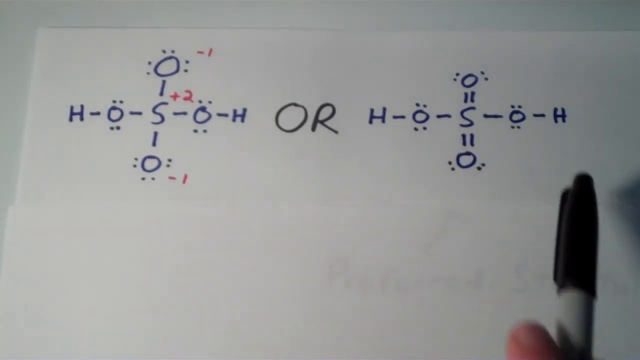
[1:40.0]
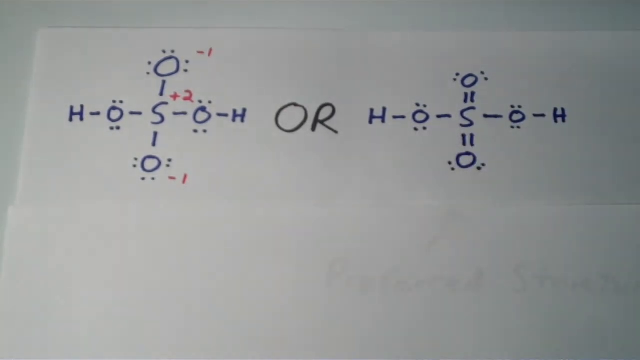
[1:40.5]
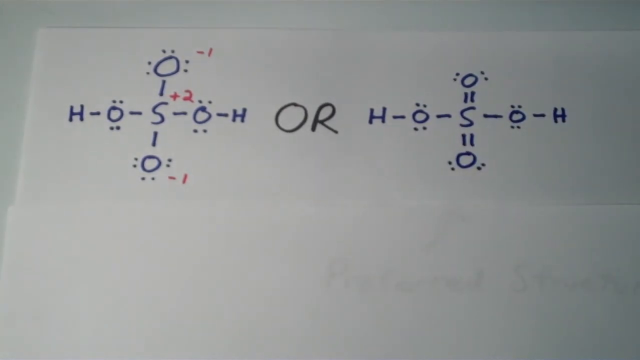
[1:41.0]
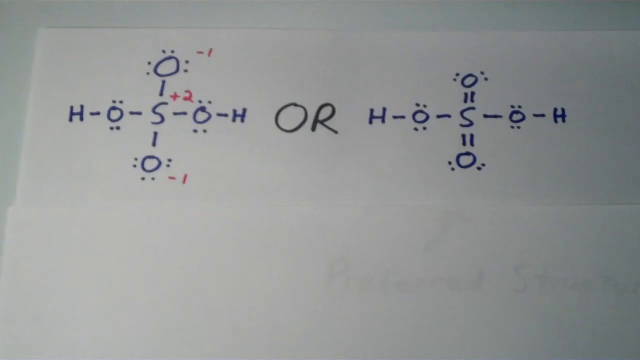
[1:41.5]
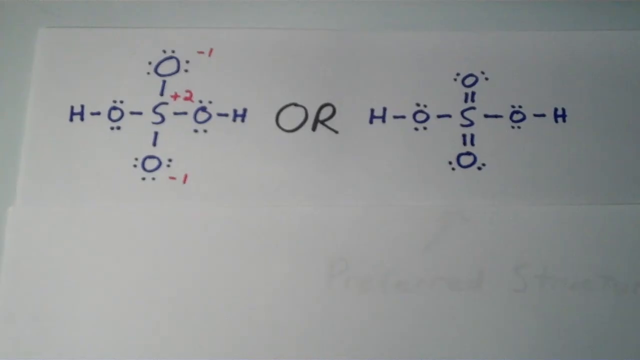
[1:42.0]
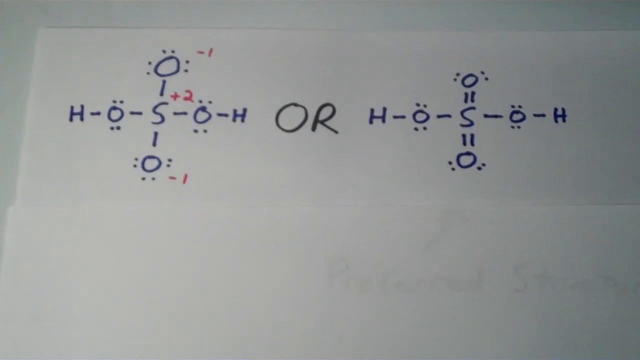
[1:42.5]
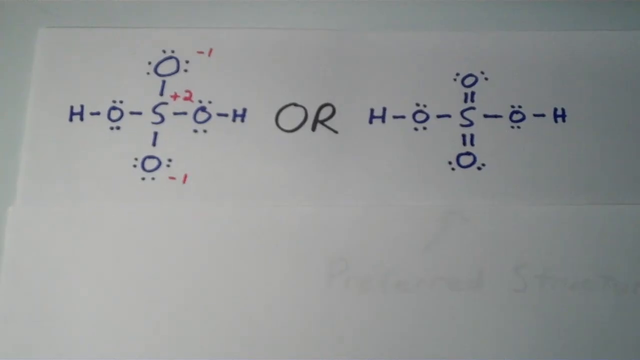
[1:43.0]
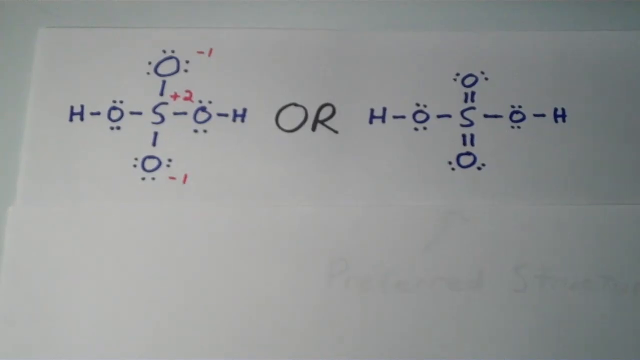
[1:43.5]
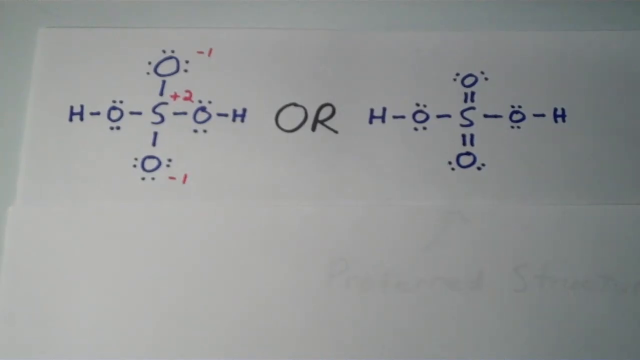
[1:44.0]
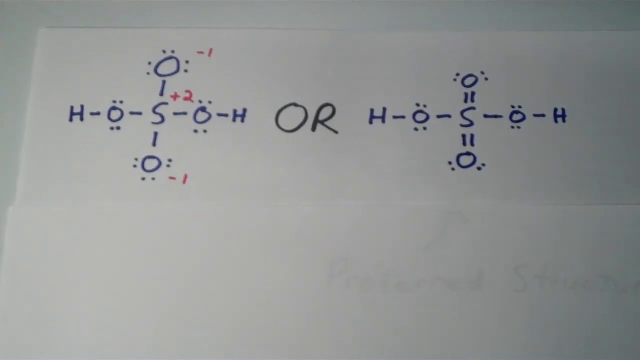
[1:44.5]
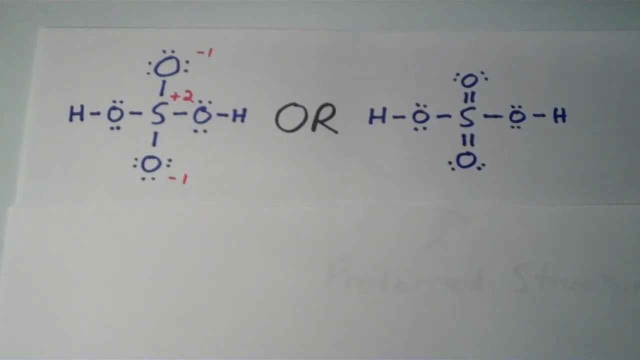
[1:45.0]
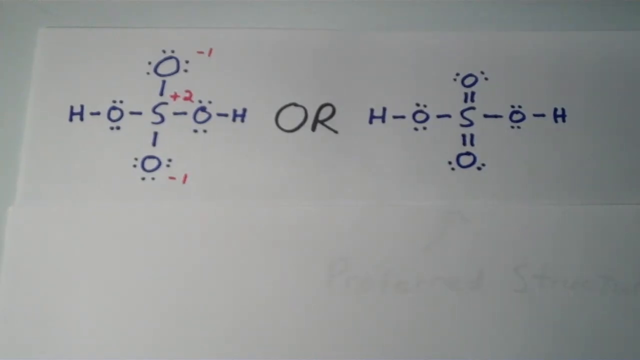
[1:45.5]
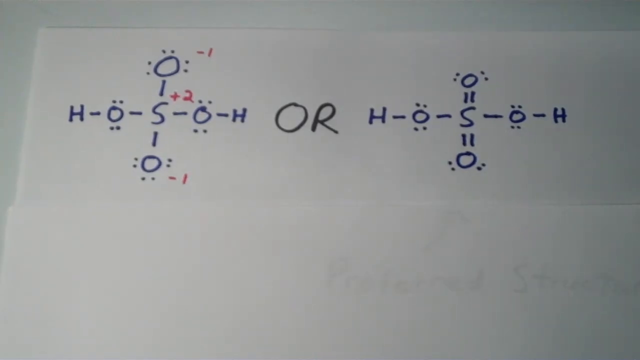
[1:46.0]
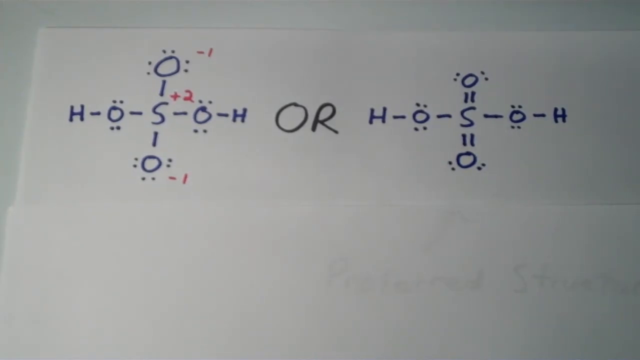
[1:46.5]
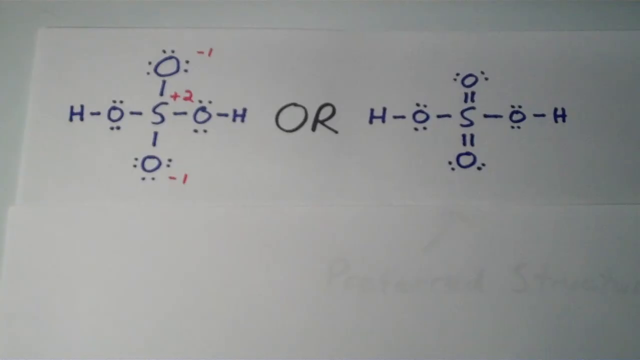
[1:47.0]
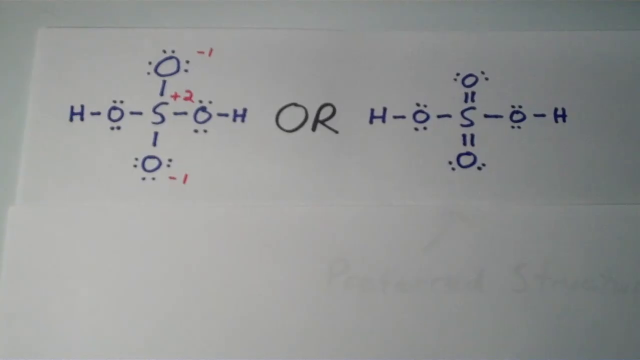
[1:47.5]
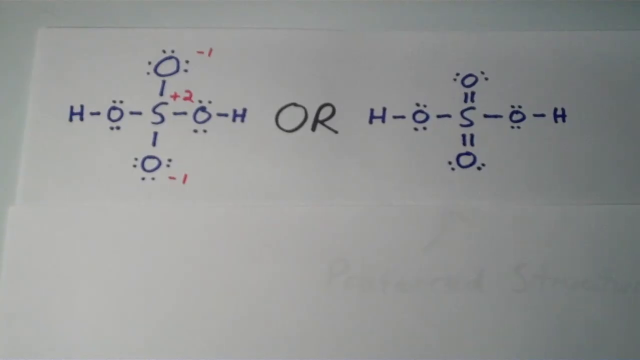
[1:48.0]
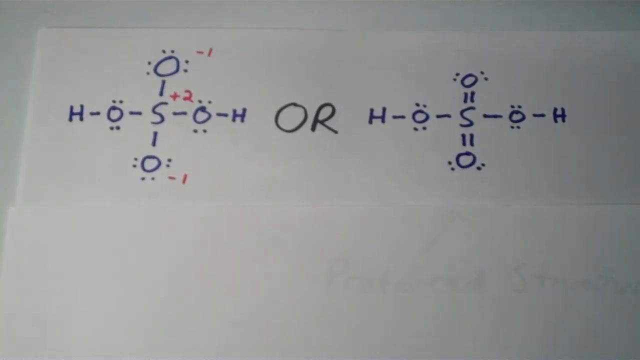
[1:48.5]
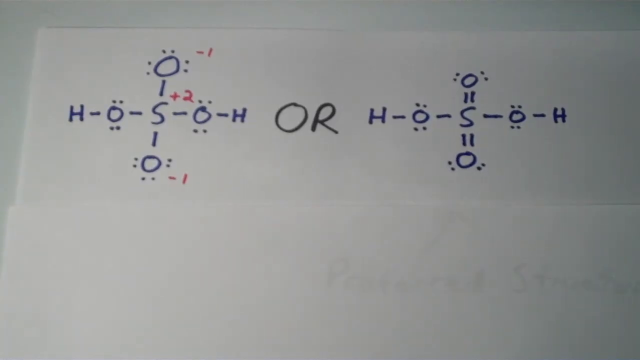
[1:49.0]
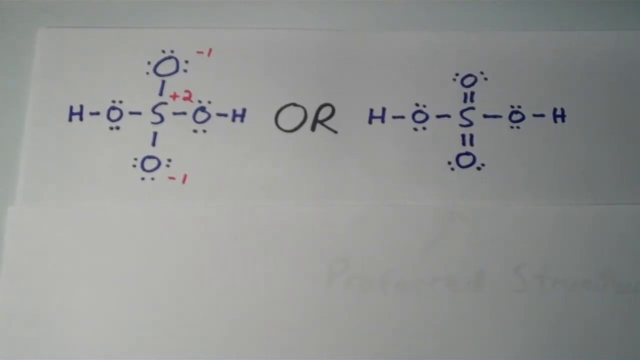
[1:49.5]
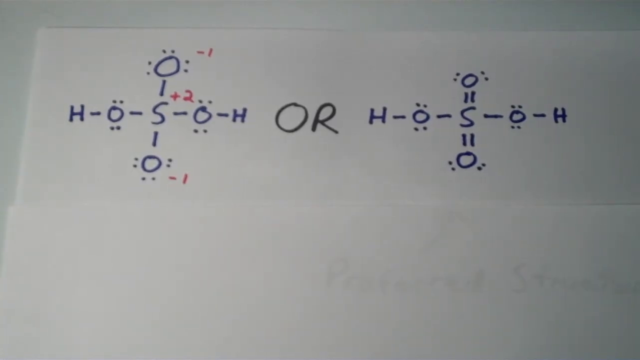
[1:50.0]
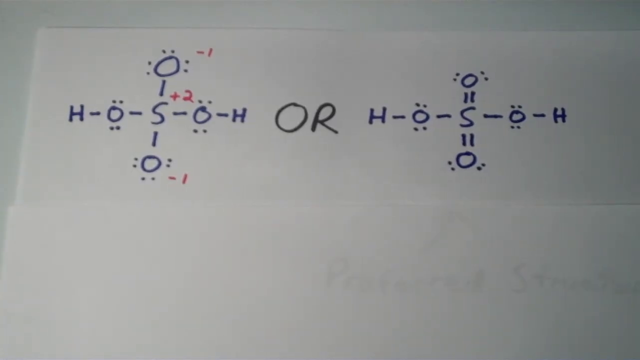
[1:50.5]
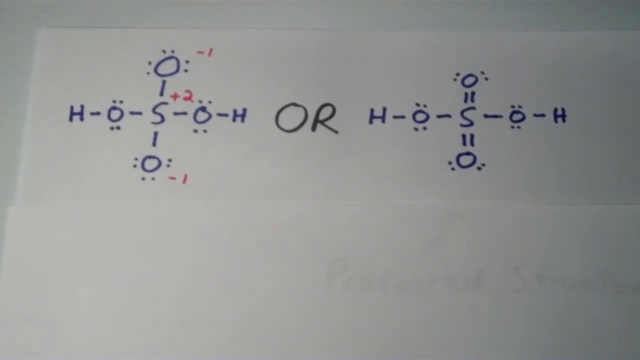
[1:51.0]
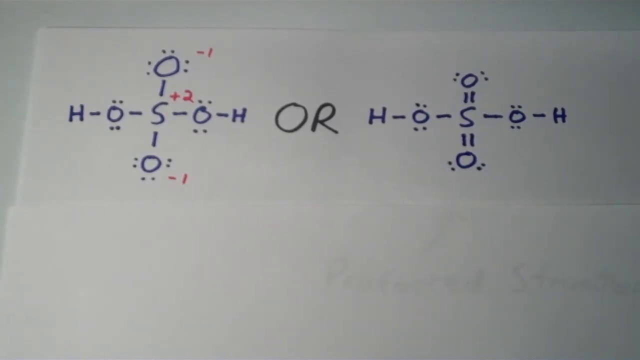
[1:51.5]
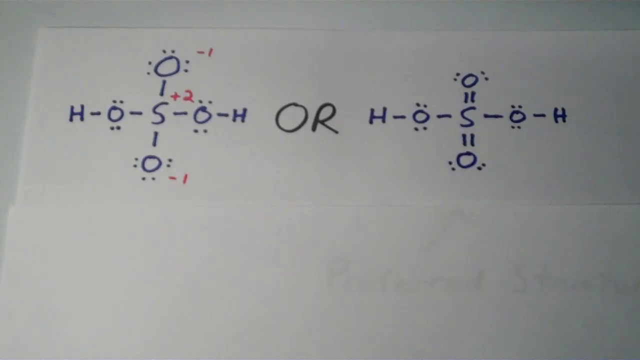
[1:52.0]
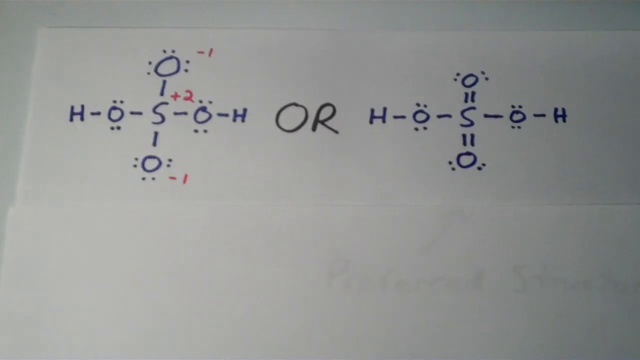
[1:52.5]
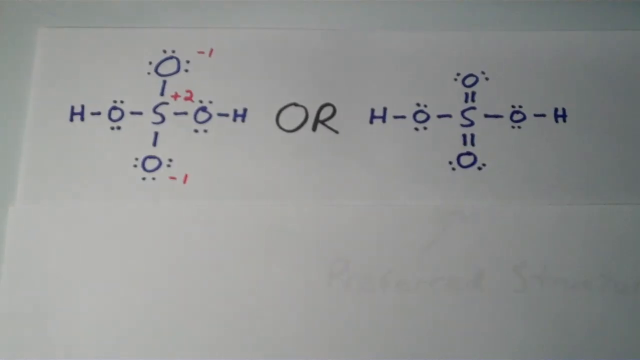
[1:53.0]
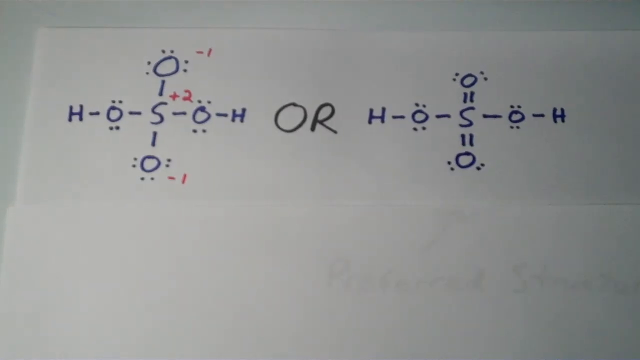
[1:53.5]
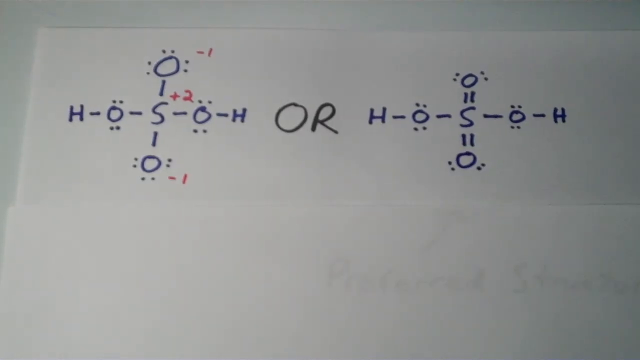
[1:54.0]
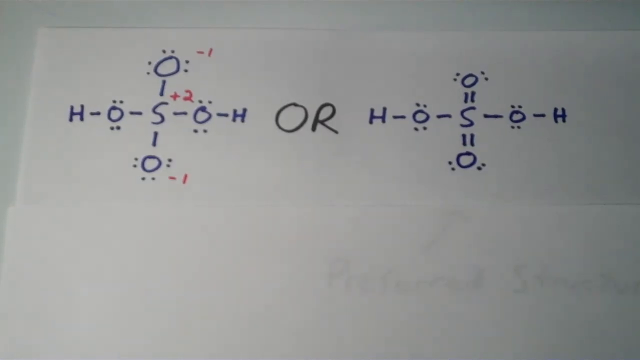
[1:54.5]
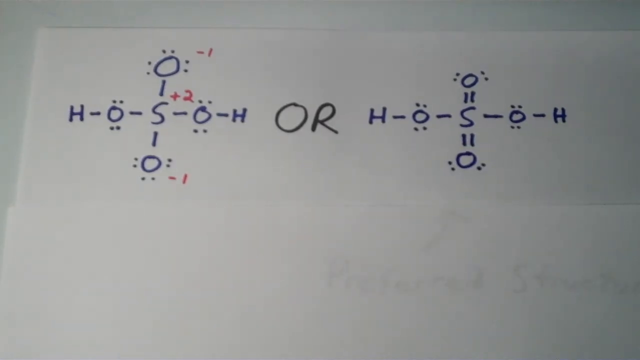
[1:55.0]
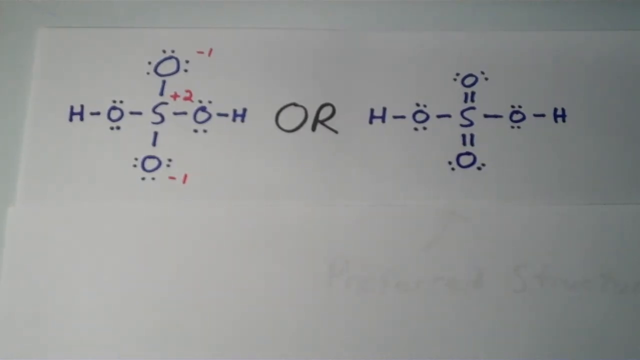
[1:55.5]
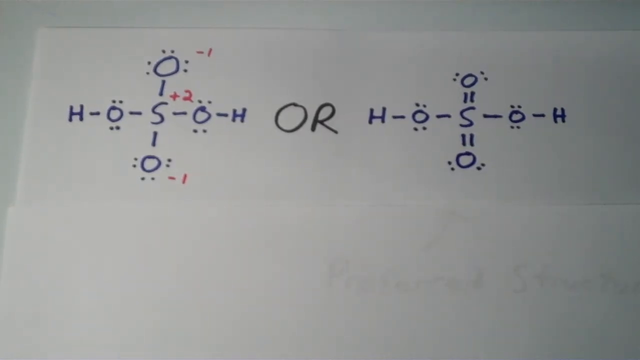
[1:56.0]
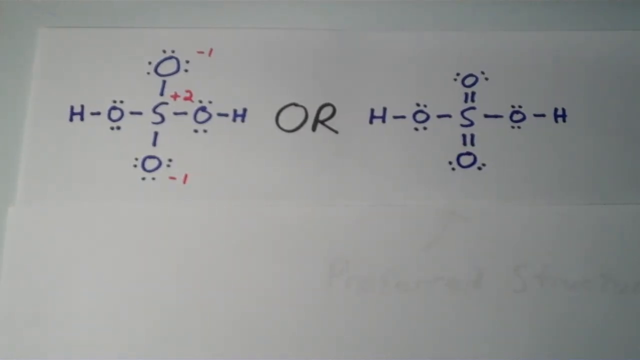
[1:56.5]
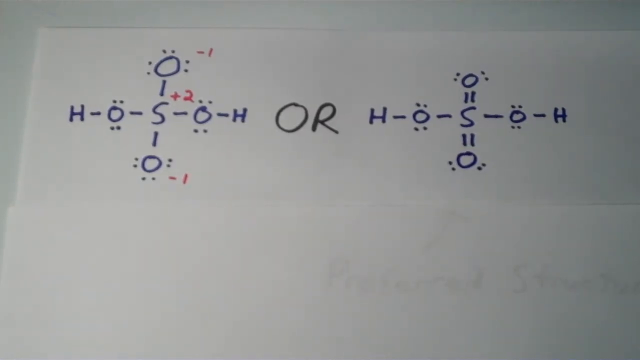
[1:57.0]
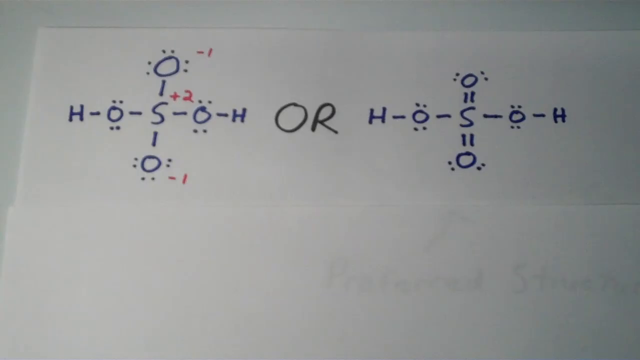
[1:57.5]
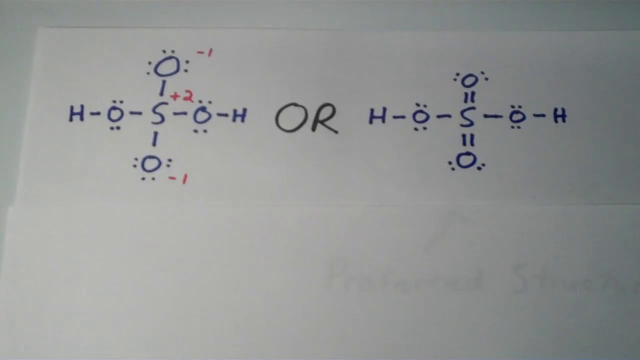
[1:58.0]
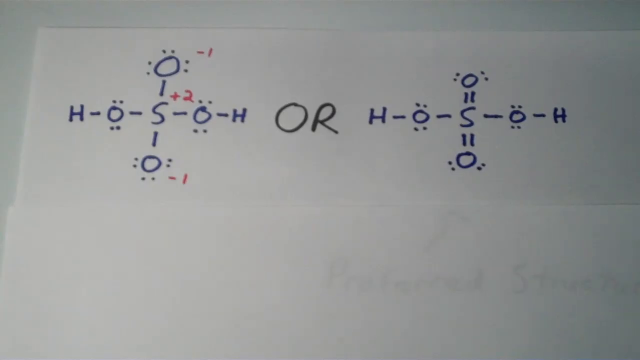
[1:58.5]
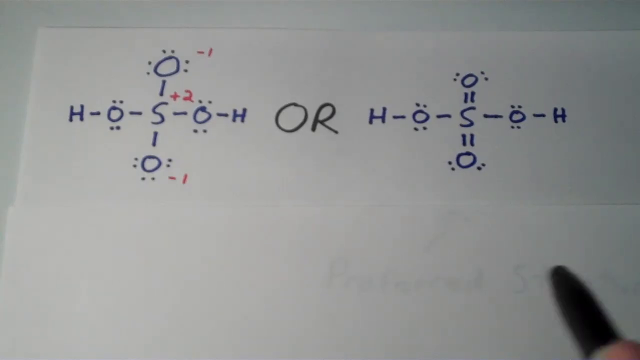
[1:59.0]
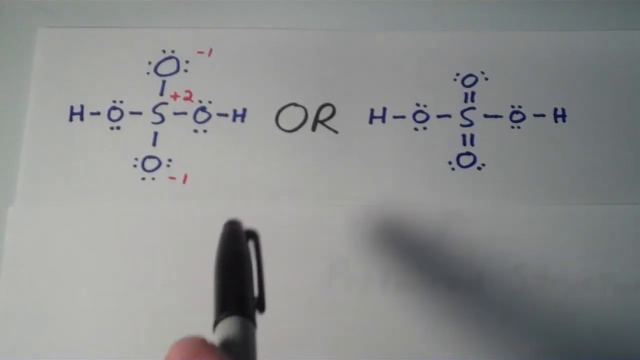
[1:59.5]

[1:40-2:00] The page does not change. The left structure shows a hydrogen atom attached to an oxygen atom with four dots around it; that oxygen is attached to a central sulfur atom, which is attached to another oxygen atom with four dots, which in turn is attached to an H atom. From the central sulfur atom, single bonds also lead to two more oxygen atoms, the top one with six dots and the bottom one with six dots. A plus two is next to the sulfur, and a negative one is on both oxygen atoms attached to the sulfur. The structure on the right is much the same, except that the oxygen atoms attached to the sulfur atom are double bonded and have four dots each instead of six.